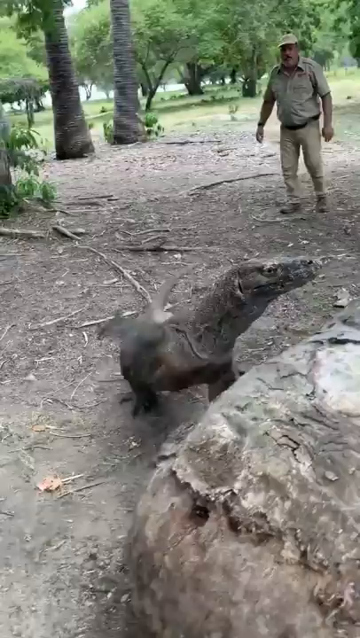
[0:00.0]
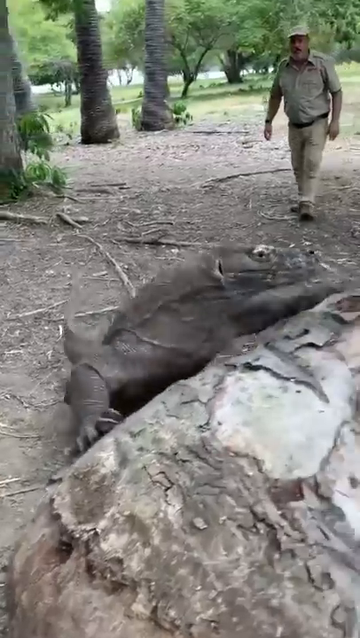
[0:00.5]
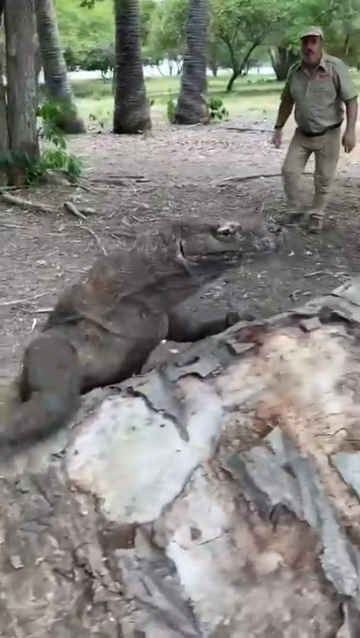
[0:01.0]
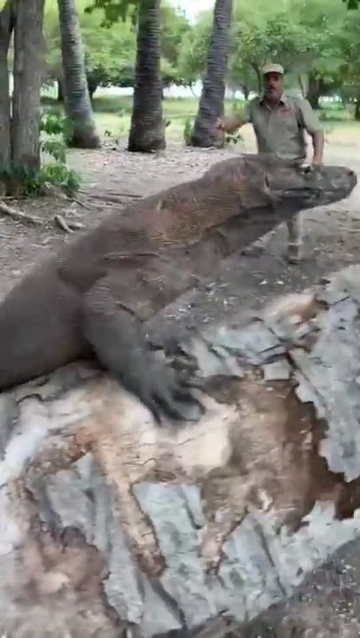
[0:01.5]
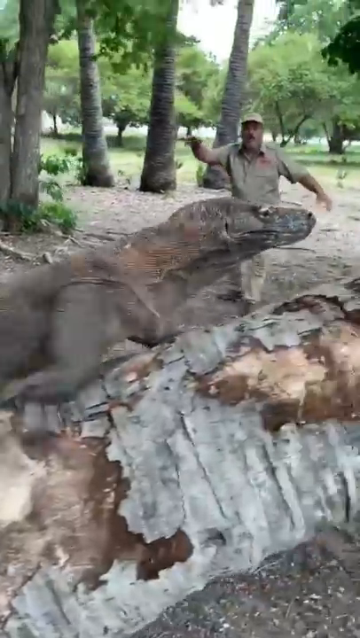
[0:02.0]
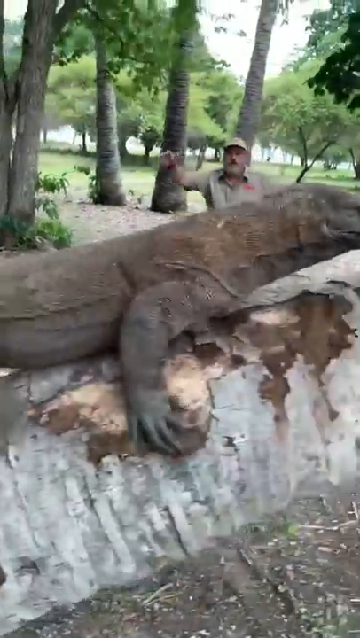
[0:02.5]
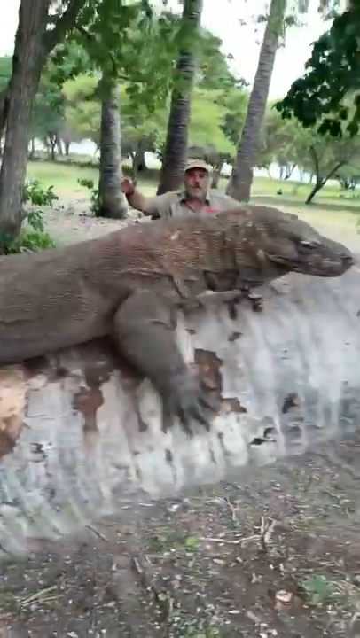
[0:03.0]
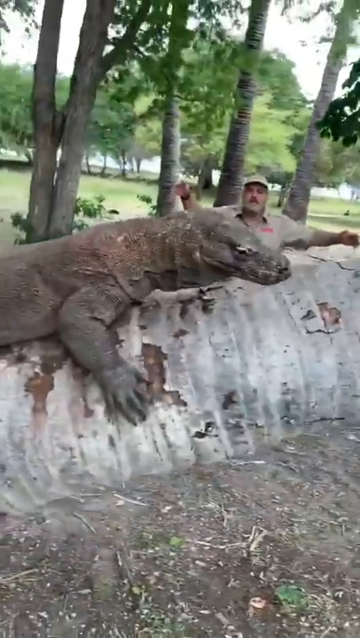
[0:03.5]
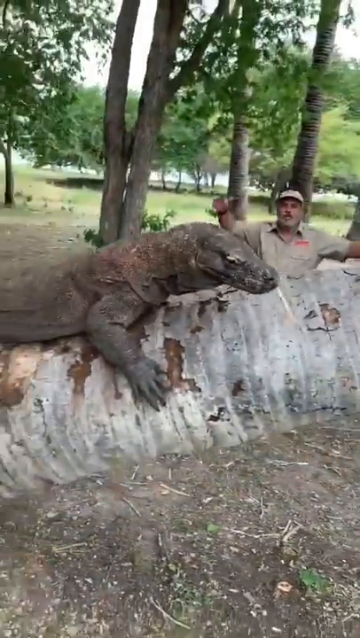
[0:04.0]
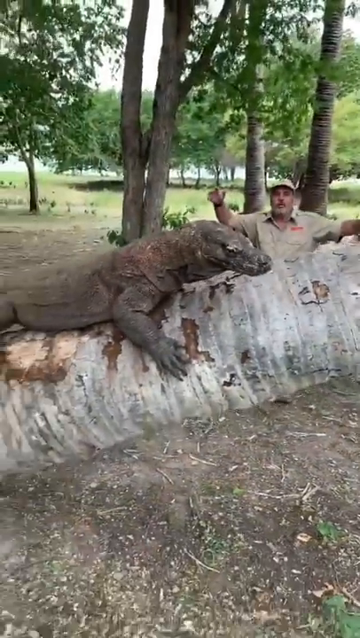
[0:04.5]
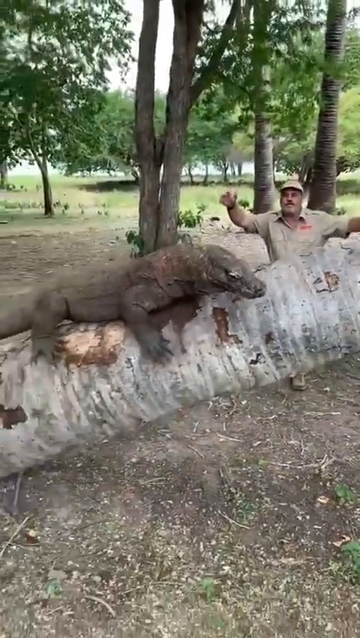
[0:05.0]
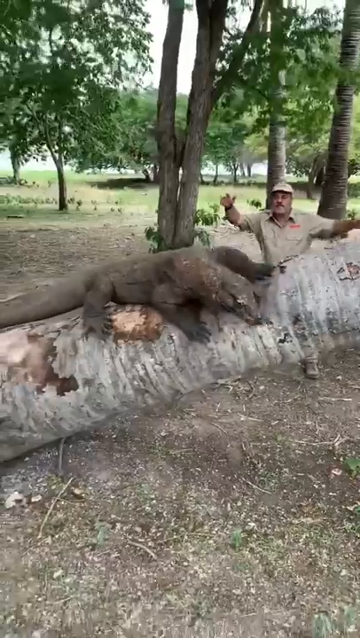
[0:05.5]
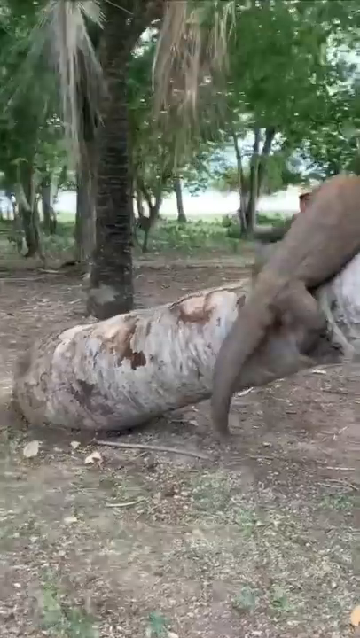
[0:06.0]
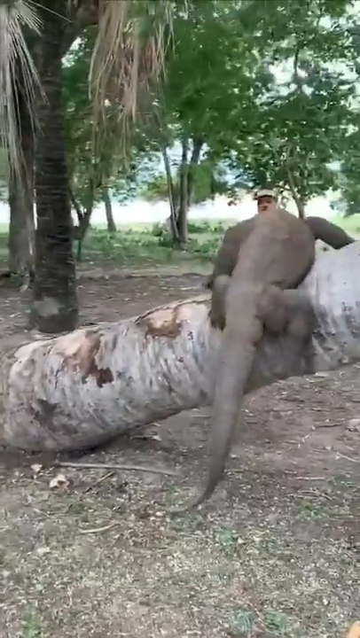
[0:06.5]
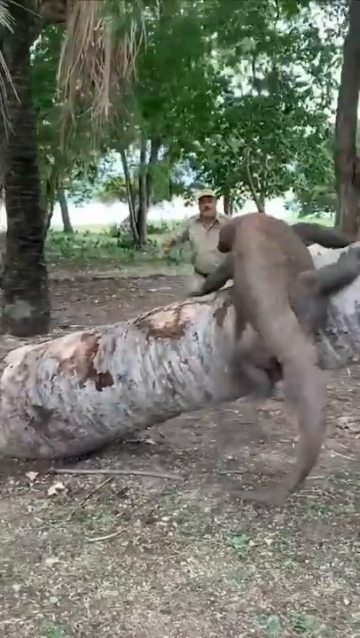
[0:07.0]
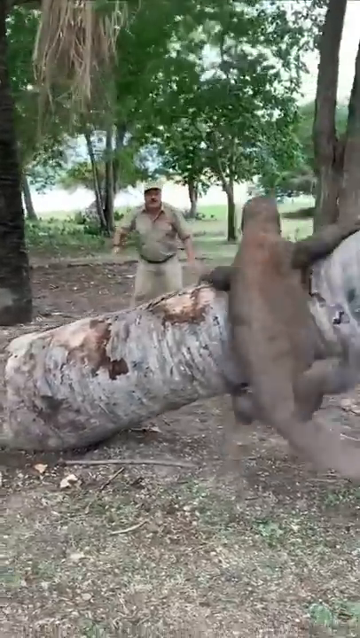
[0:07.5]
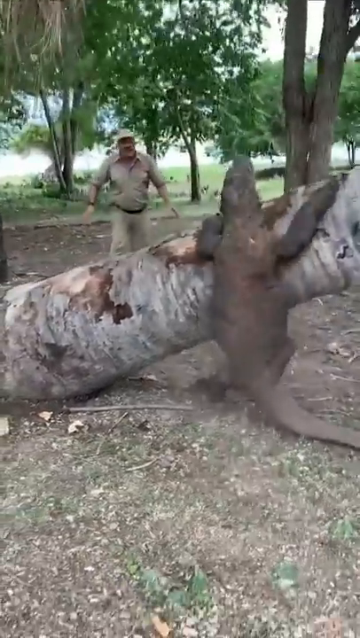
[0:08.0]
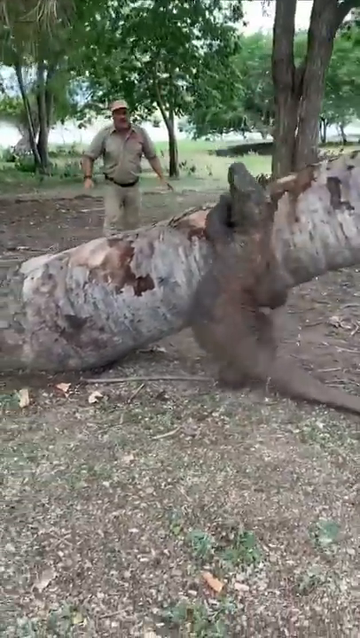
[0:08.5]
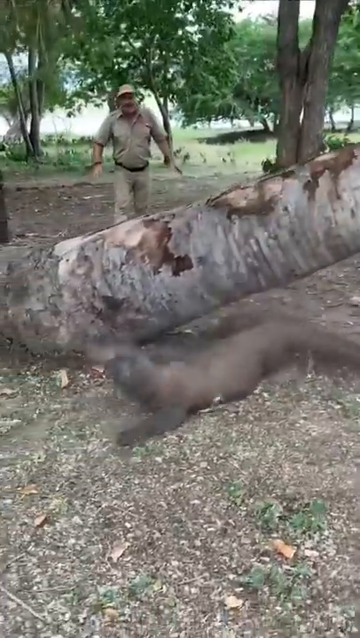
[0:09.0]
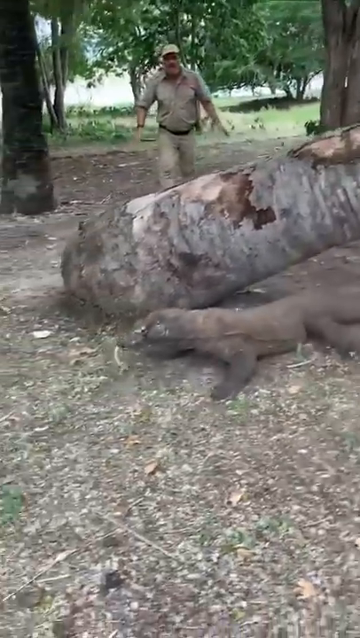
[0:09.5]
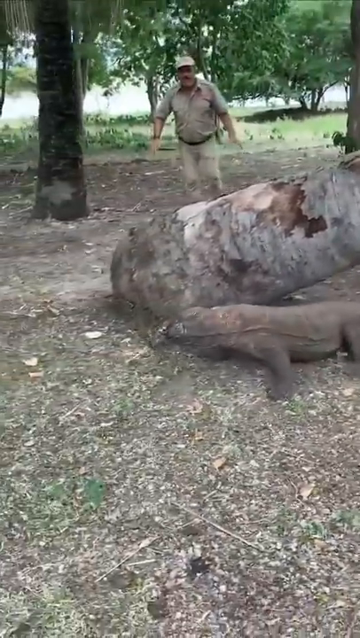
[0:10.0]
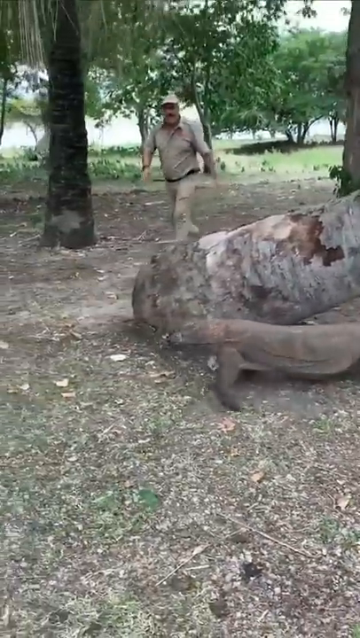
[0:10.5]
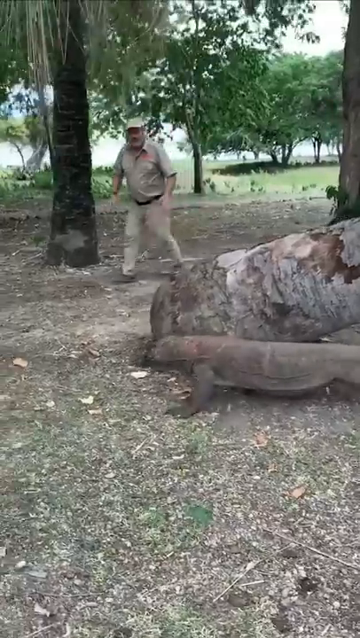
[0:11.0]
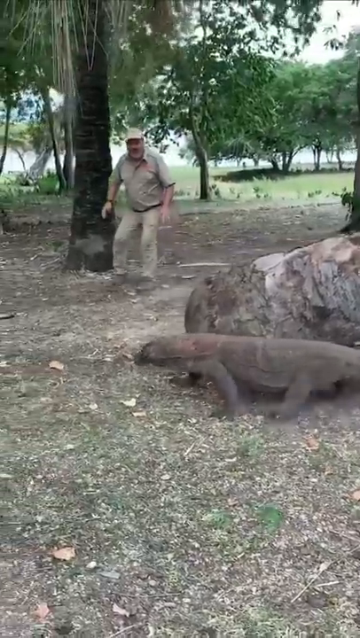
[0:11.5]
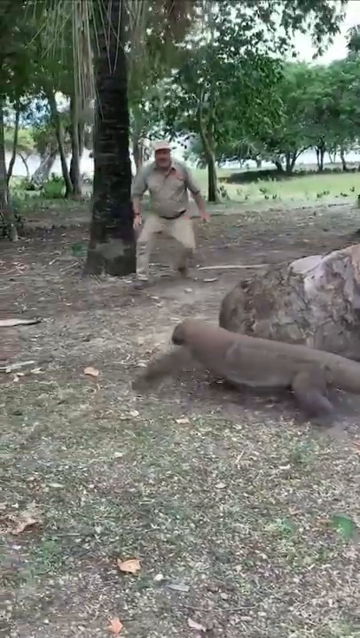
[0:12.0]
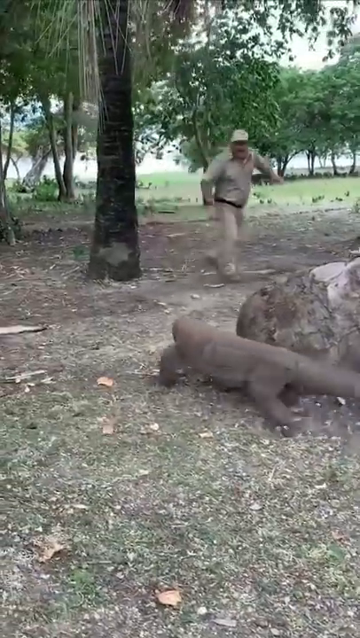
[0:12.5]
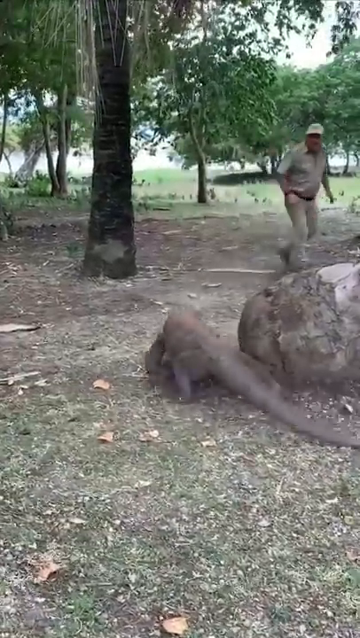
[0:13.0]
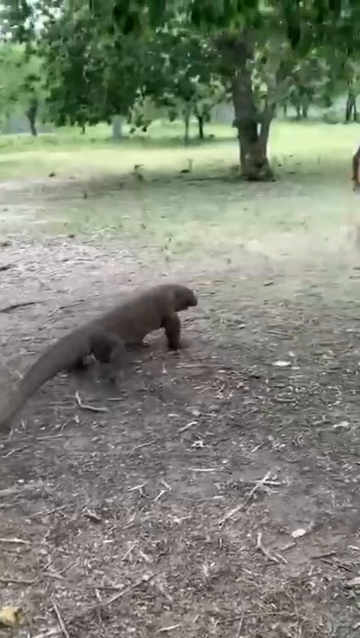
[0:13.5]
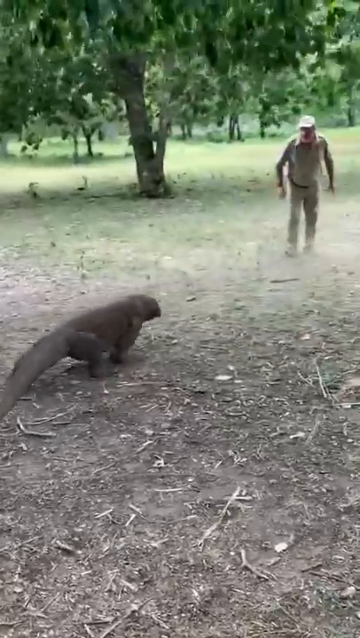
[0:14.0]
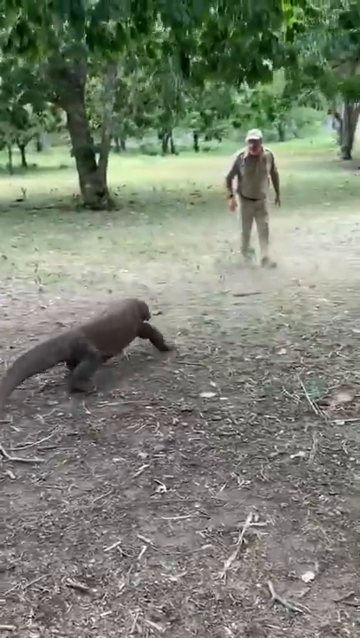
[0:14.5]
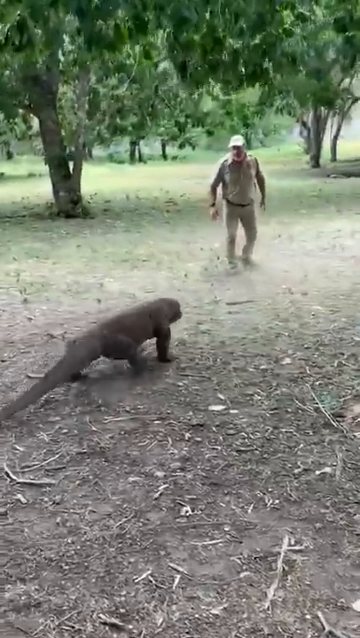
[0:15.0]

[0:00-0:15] Outdoors, with trees in the background, a large Komodo dragon starts climbing up the bark of a tree. In the background, a man wearing a hat and uniform throws his arms up in the air and looks like he is saying something to the Komodo dragon. The Komodo dragon then falls off the tree onto the ground, walks around, and then starts walking towards the man, who looks like the zookeeper. It is a relatively overcast day, pretty gray out. There is some grass in the background, but where they are walking is mostly just dirt.